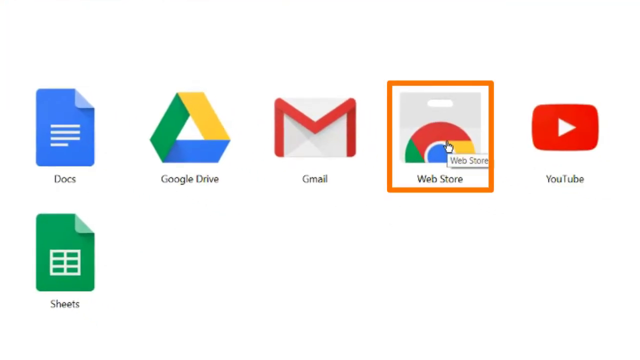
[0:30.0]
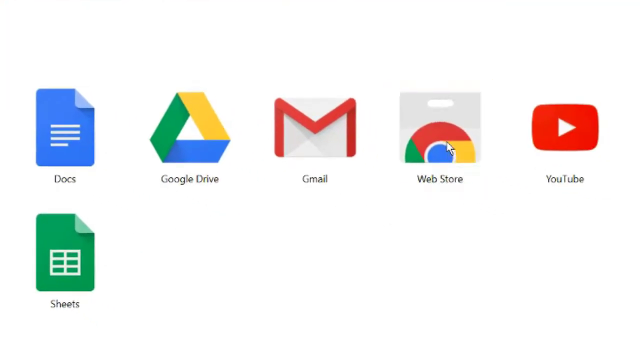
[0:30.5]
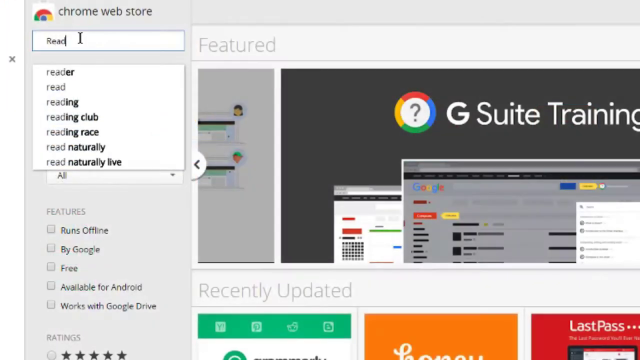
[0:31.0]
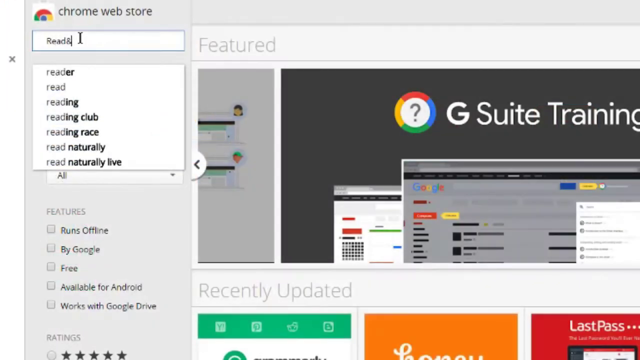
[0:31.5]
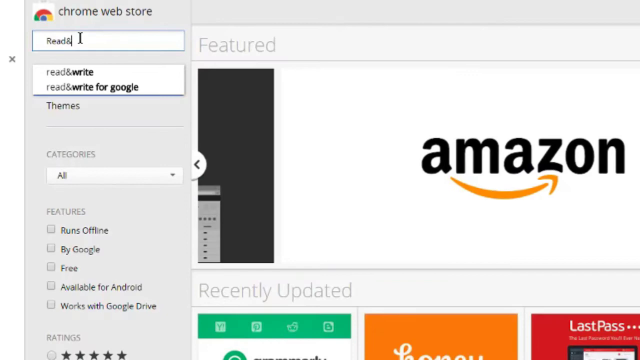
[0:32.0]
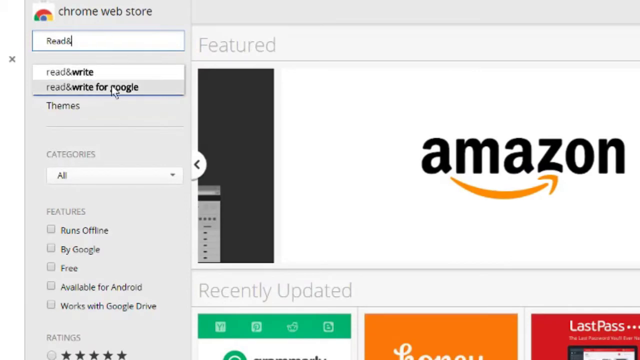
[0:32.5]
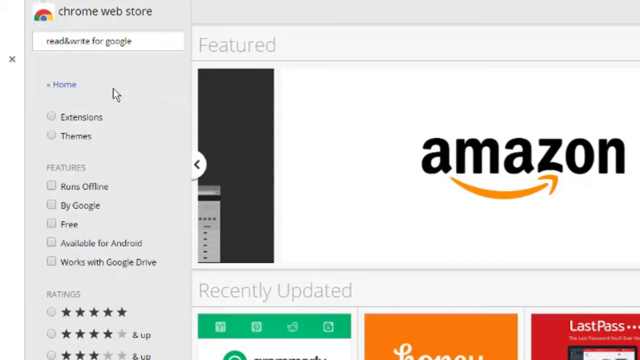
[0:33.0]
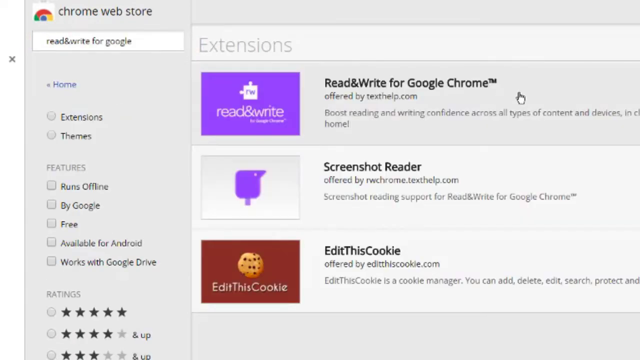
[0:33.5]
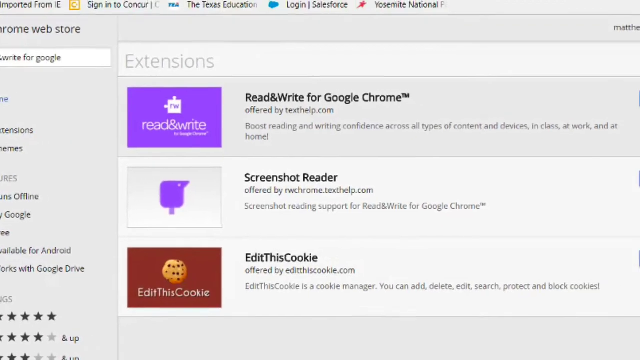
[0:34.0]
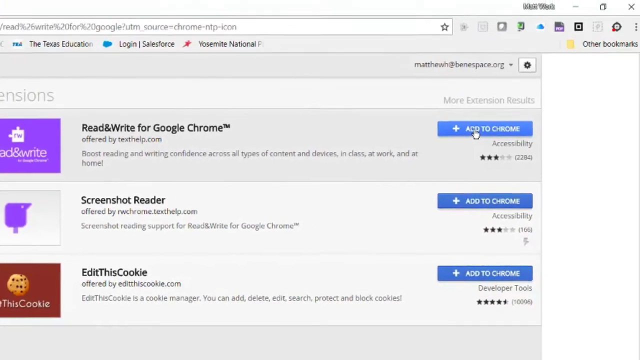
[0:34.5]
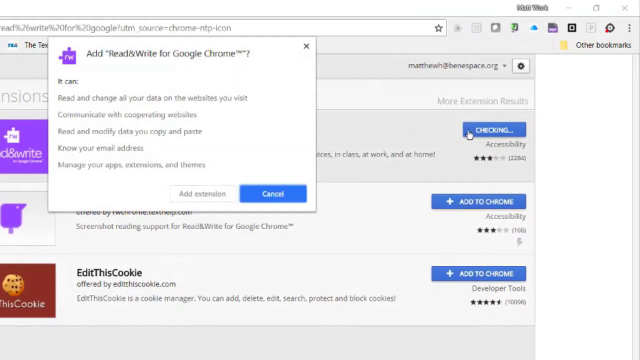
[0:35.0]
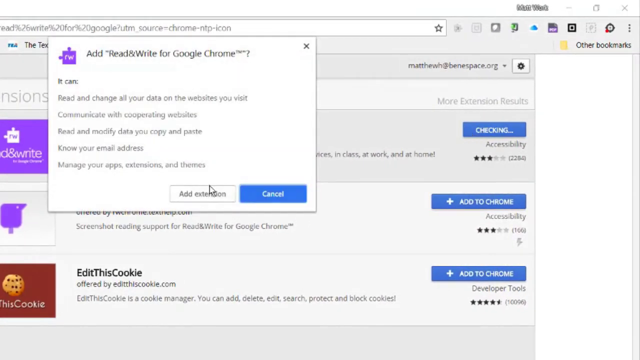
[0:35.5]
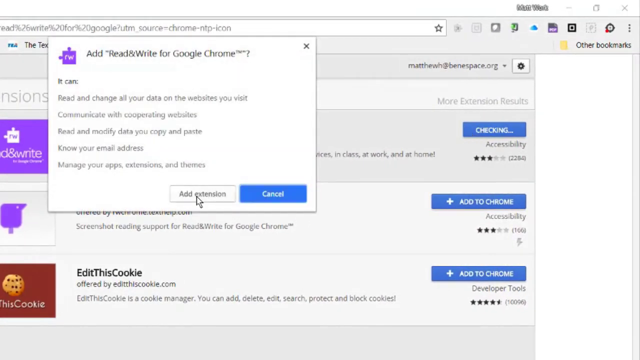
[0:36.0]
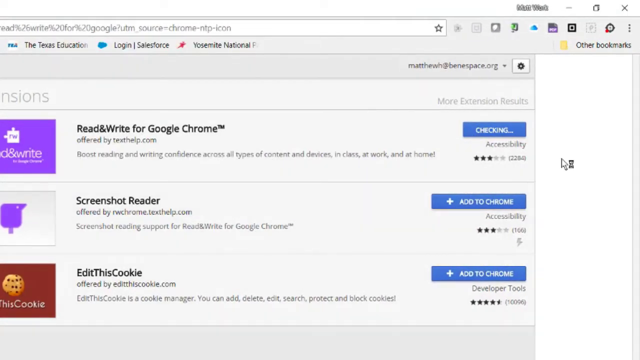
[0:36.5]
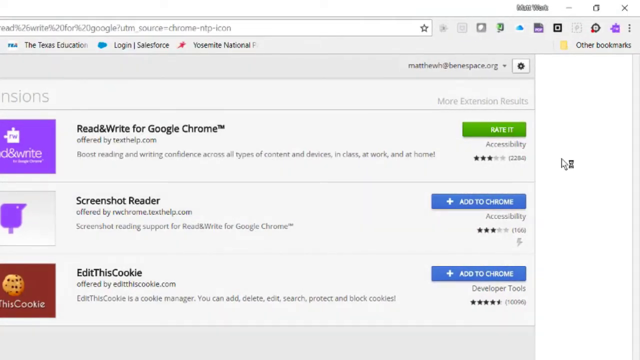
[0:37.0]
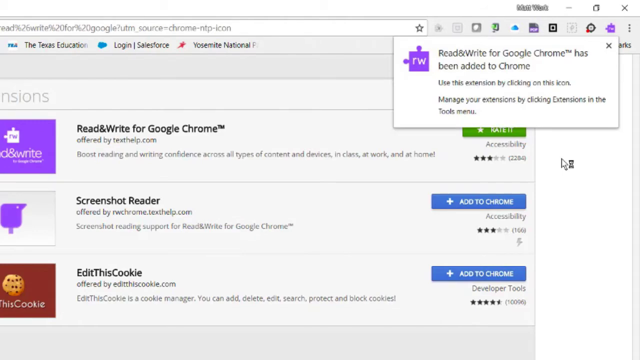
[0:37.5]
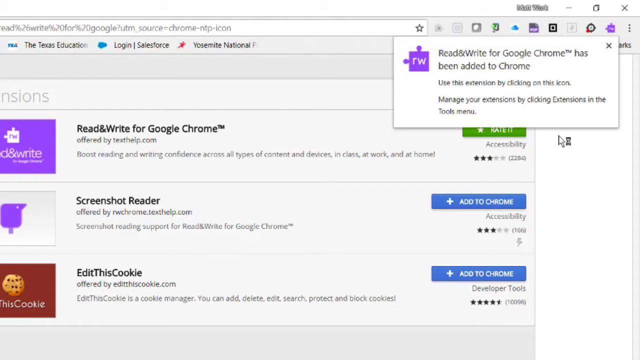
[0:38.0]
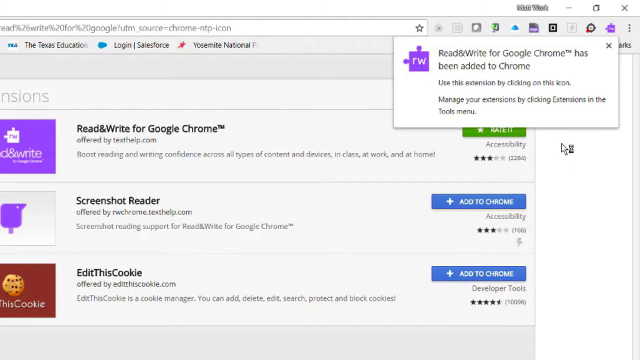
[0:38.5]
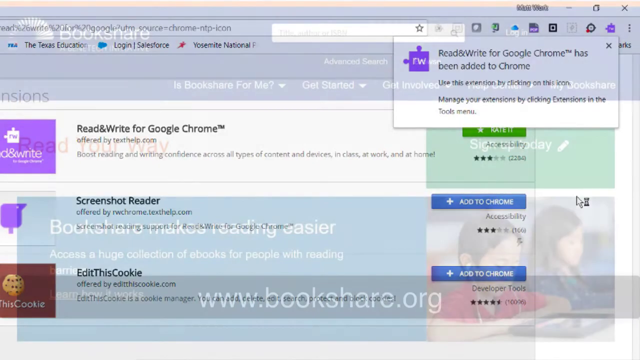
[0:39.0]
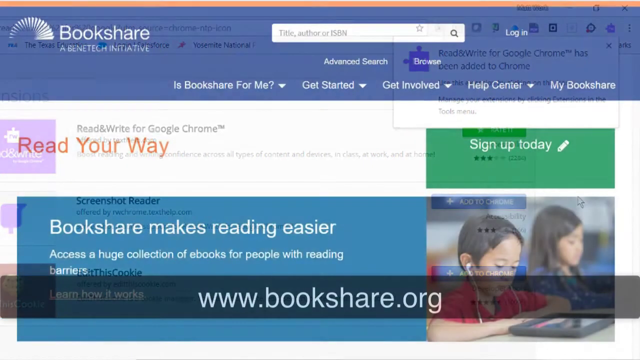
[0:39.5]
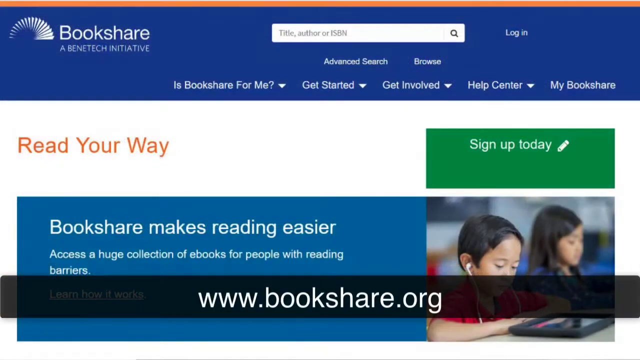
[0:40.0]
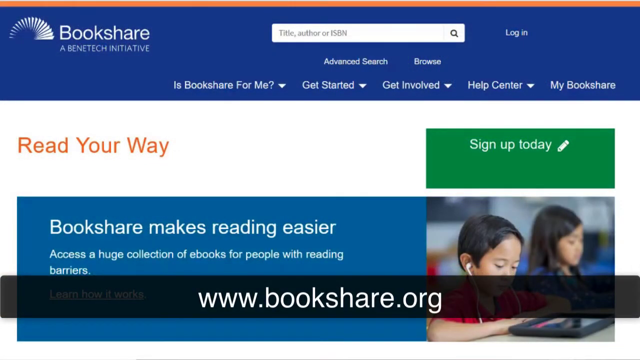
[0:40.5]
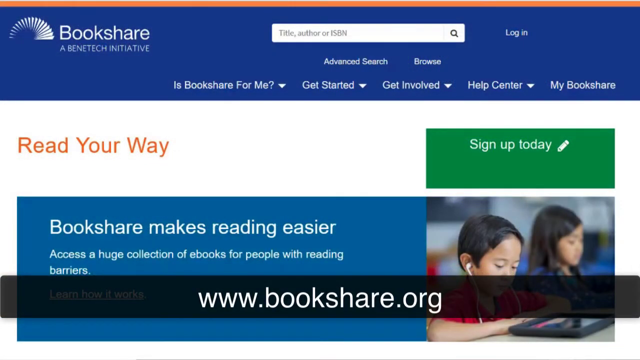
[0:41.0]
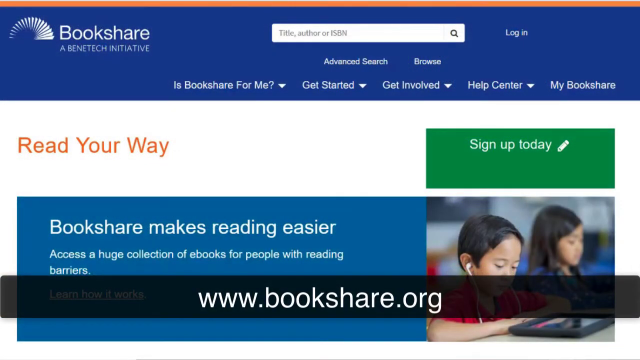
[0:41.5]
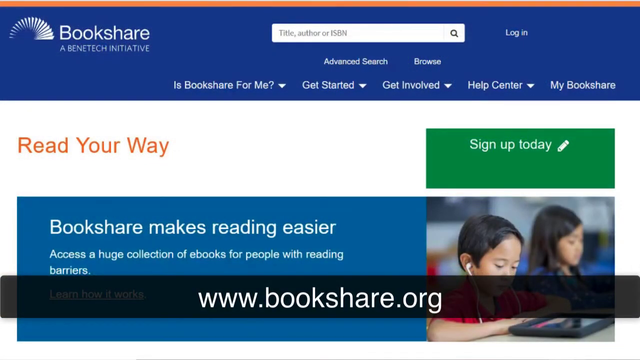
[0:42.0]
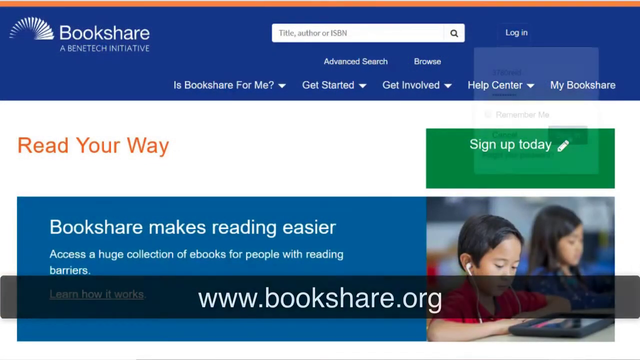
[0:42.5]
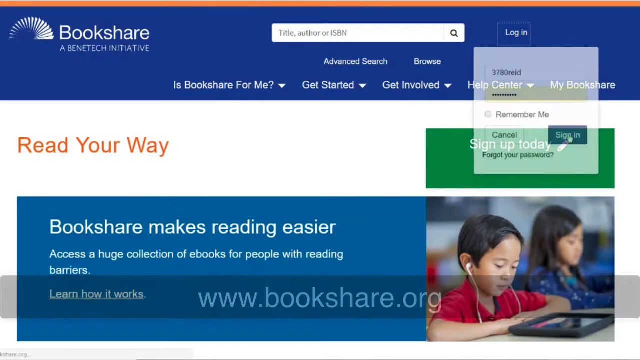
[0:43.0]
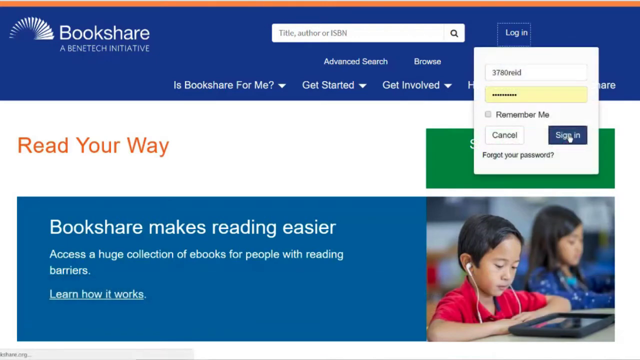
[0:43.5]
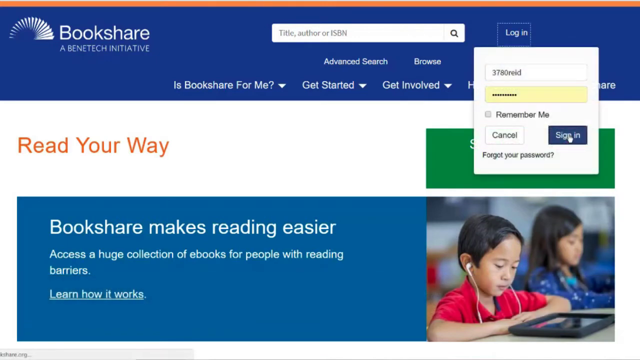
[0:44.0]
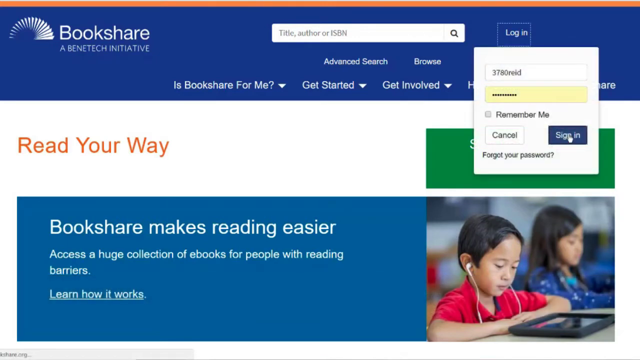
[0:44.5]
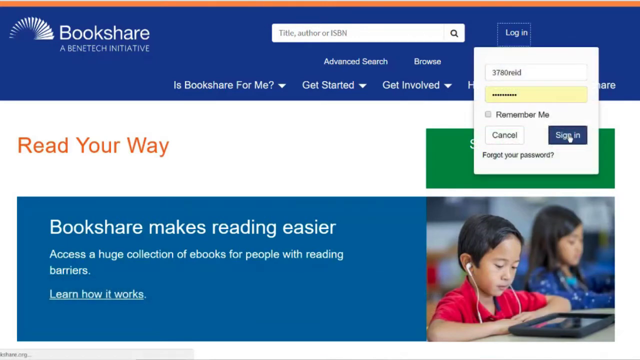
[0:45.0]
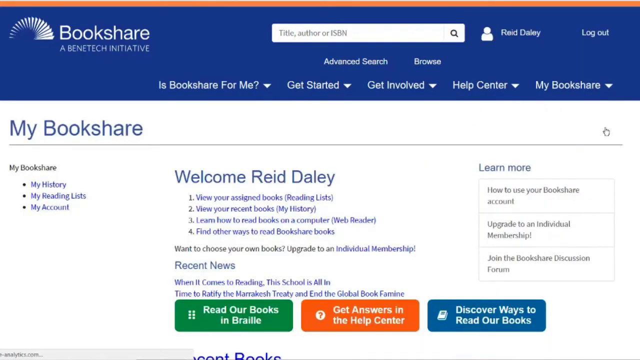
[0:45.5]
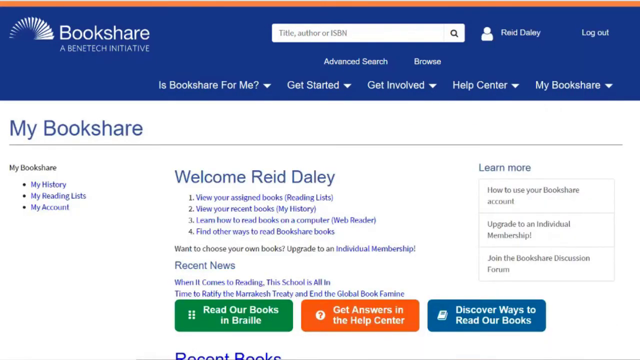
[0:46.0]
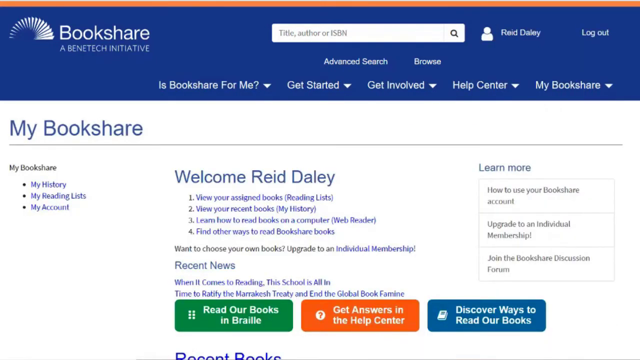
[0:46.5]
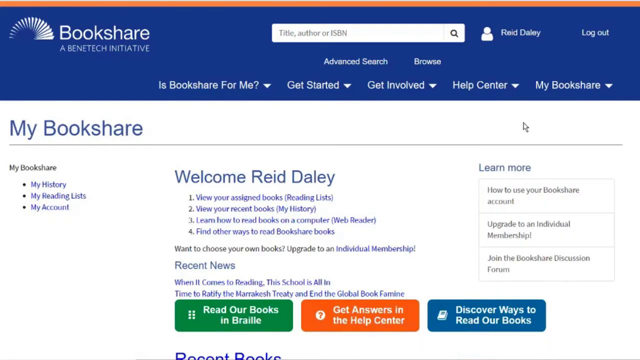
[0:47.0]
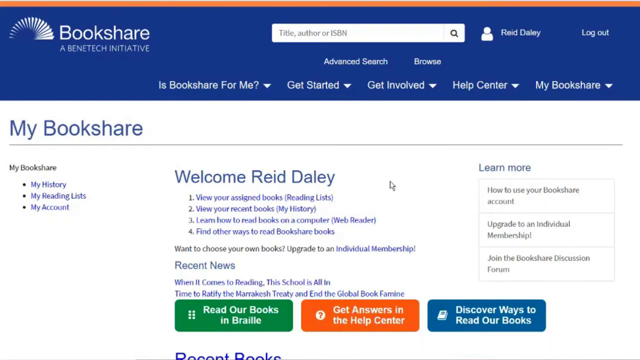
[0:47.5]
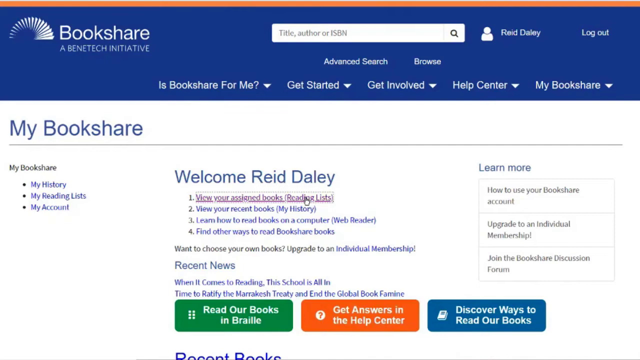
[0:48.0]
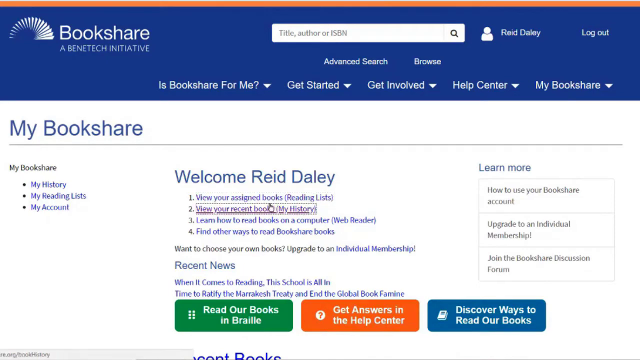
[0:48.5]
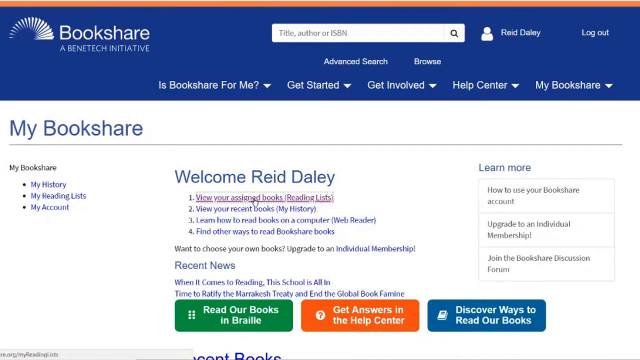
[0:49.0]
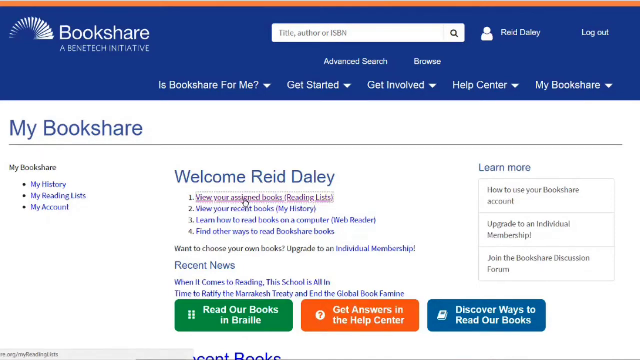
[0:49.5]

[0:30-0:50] The user highlights the Web Store app with an orange square and selects it. The scene transitions to the Google Web Store on desktop, where the user types "read &" into the search field and selects a suggested option, "read and write for Google." Extensions appear on the right side of the screen, the top one being the Read and Write for Google Chrome extension, among others such as screenshot reader and edit this cookie. The view pans to the right, where the user selects the "add to Chrome" option. A prompt pops up reading "add read and write for Google Chrome," with options to add the extension or cancel and a brief description of what the extension can do. The user clicks to add the extension, and a confirmation box pops up saying that Read and Write for Google Chrome has been added to Chrome. The scene transitions to a blue and white web page titled "Bookshare, a Benetech initiative," with options such as "is Bookshare for me," "get started," "get involved," "help center," and "my Bookshare," plus a search bar at the top and a log in option in the top right. A panel briefly pops up reading "www.bookshare.org." The user signs in, and their personal Bookshare page appears, displaying their name along with their history, reading lists, and account information.